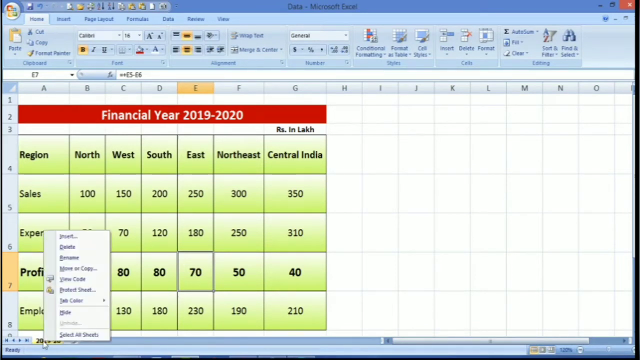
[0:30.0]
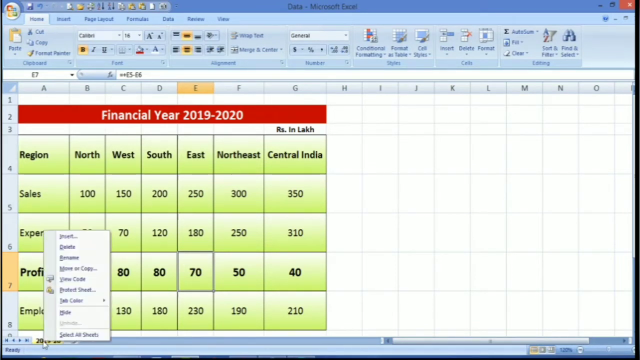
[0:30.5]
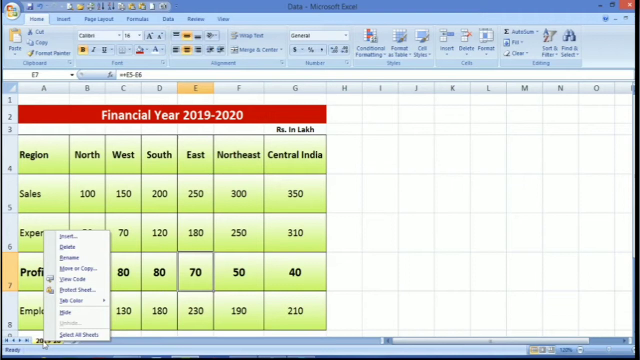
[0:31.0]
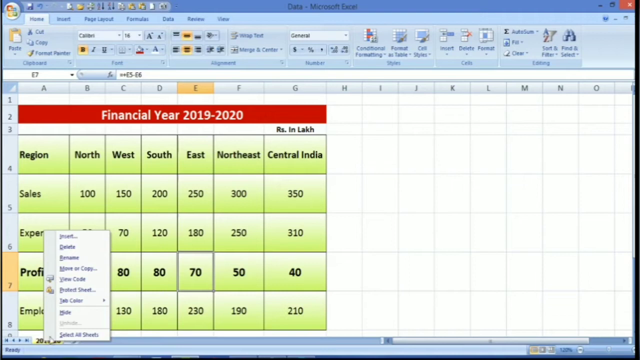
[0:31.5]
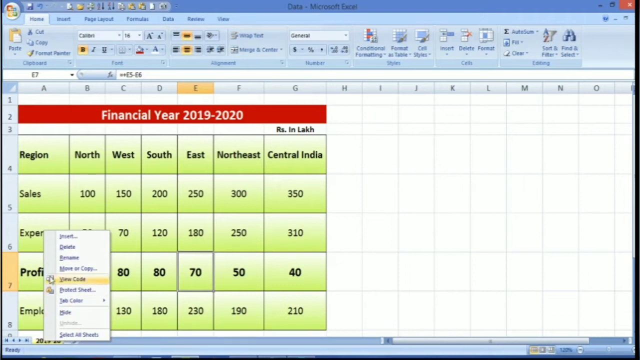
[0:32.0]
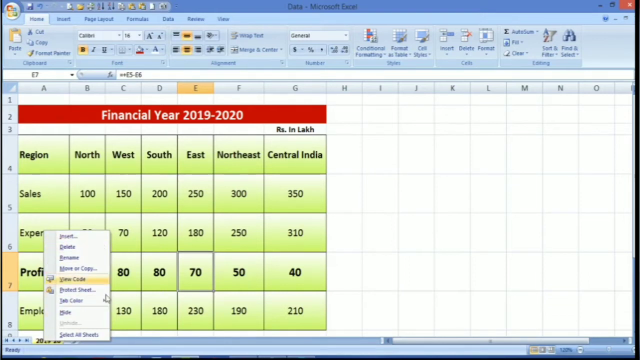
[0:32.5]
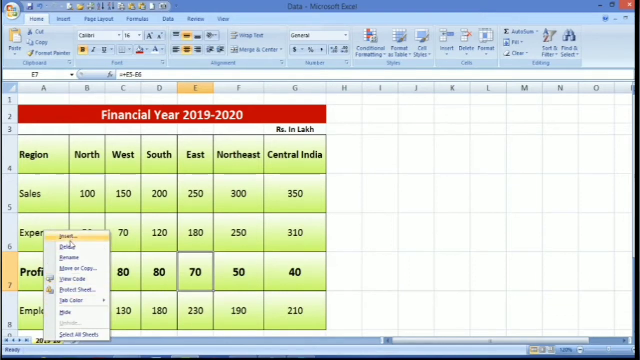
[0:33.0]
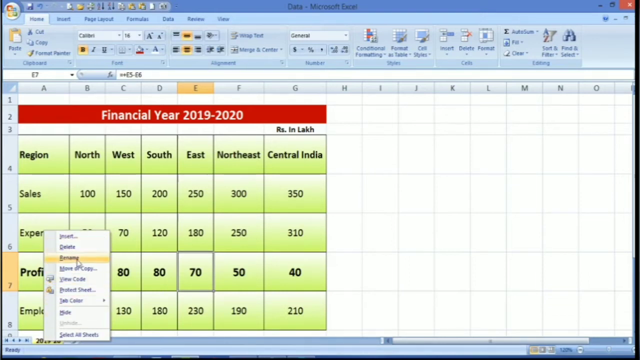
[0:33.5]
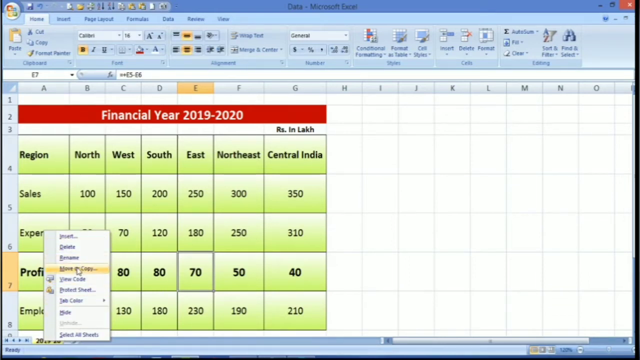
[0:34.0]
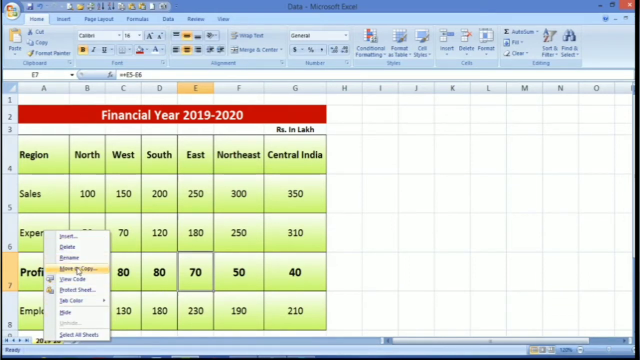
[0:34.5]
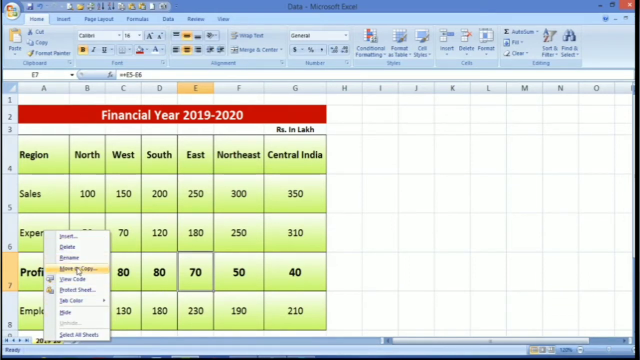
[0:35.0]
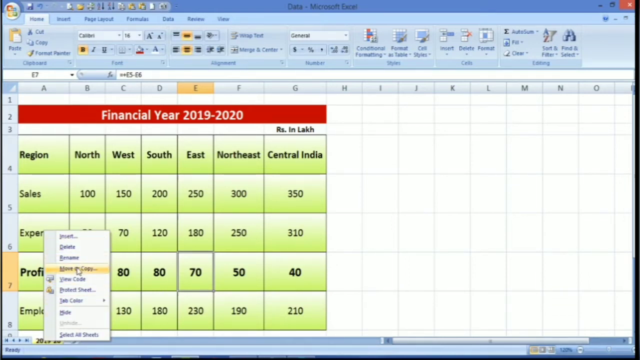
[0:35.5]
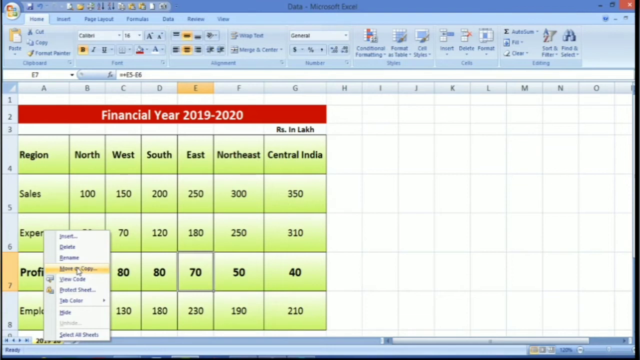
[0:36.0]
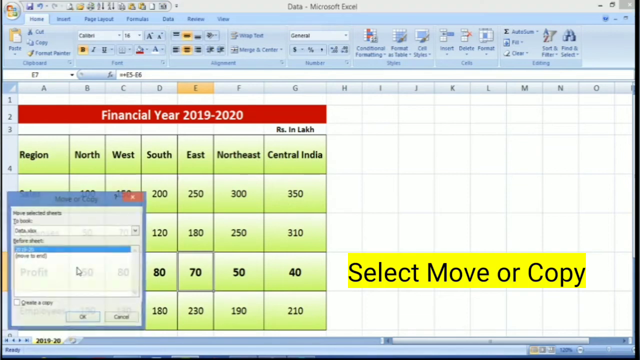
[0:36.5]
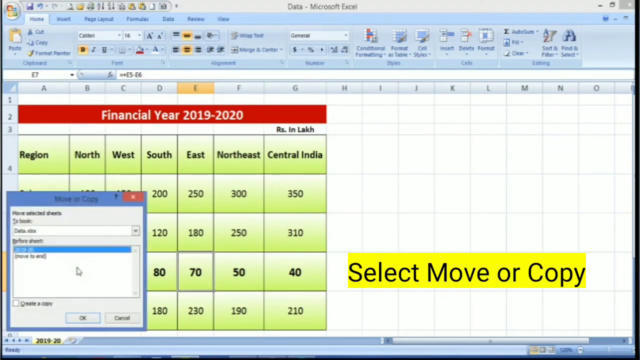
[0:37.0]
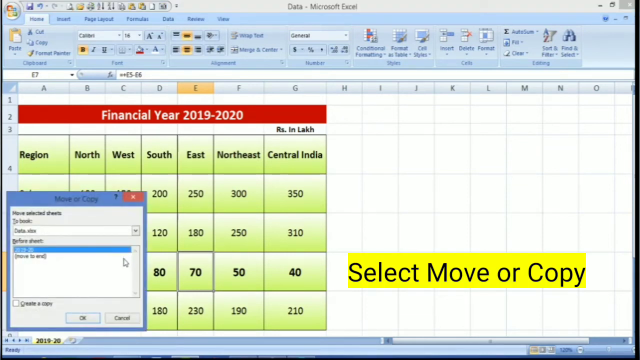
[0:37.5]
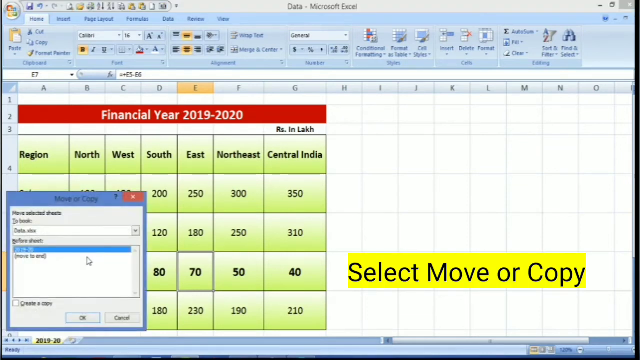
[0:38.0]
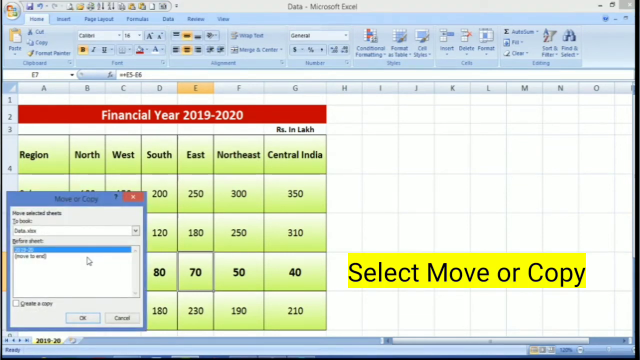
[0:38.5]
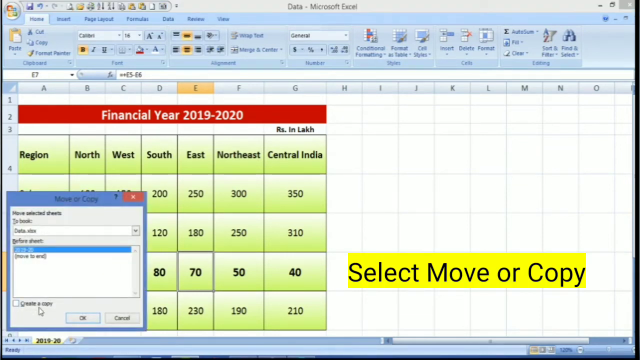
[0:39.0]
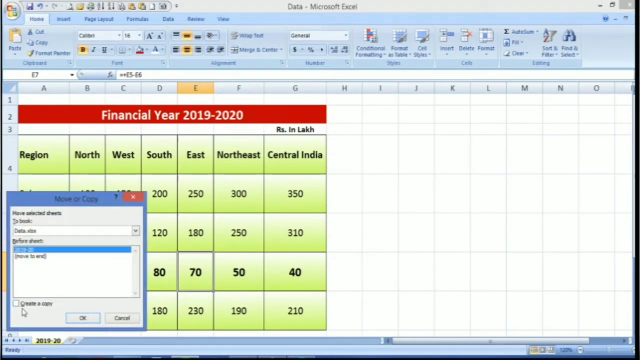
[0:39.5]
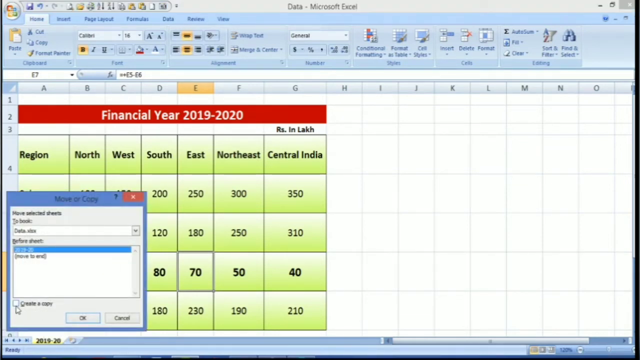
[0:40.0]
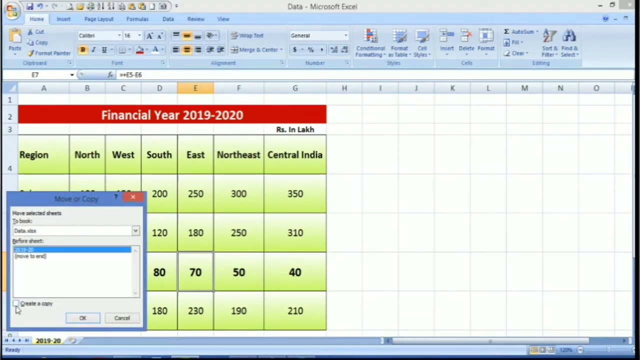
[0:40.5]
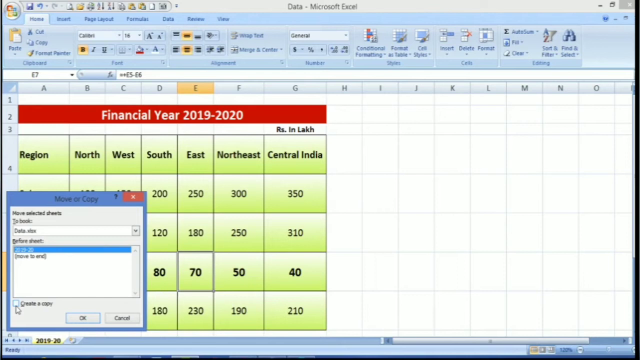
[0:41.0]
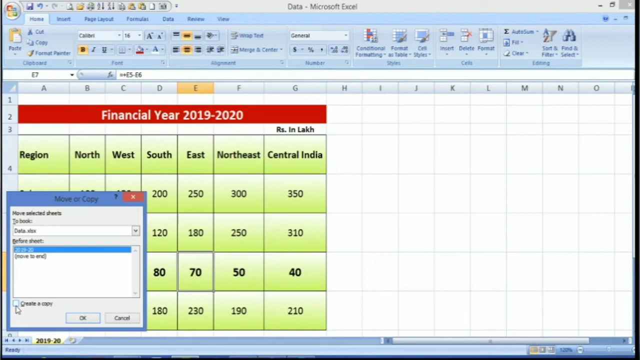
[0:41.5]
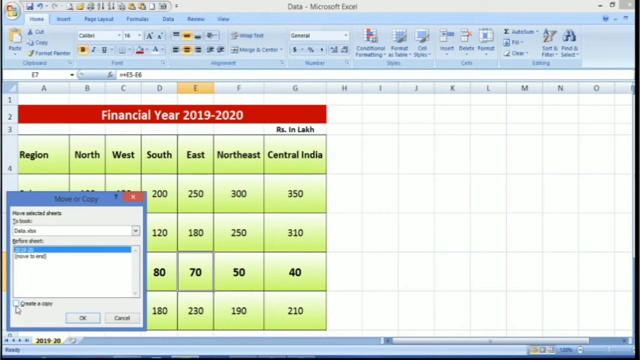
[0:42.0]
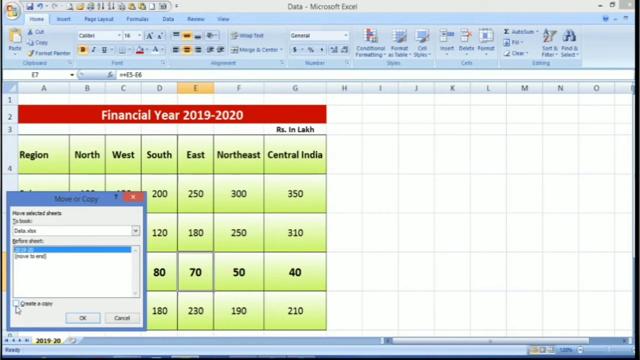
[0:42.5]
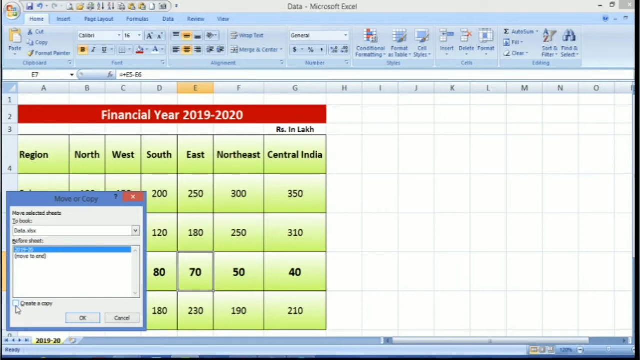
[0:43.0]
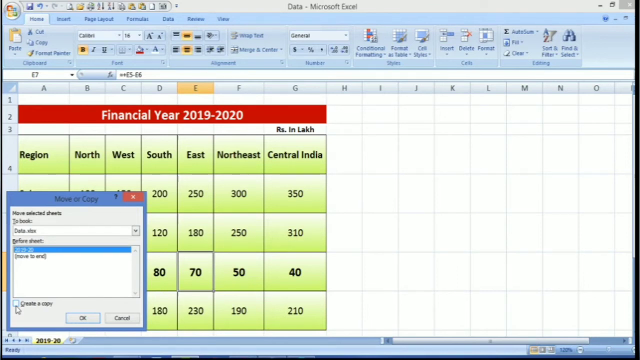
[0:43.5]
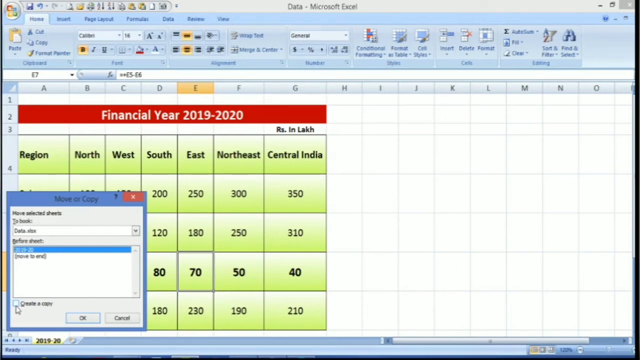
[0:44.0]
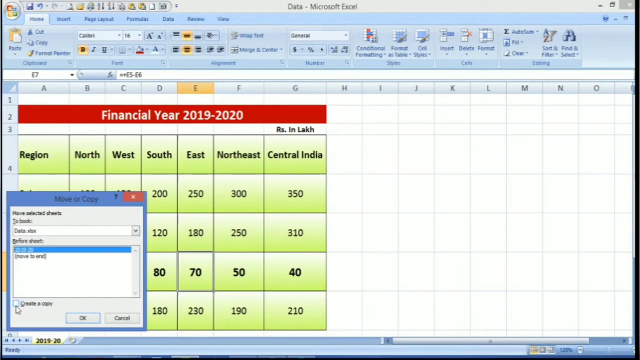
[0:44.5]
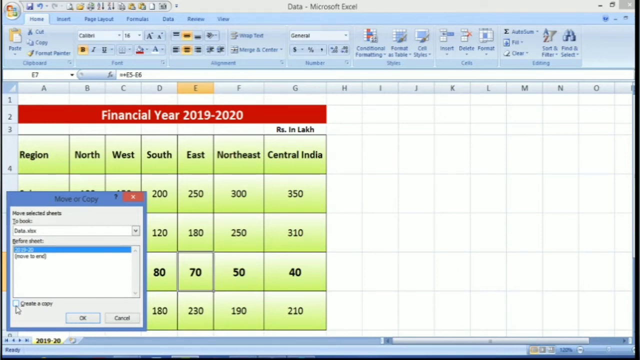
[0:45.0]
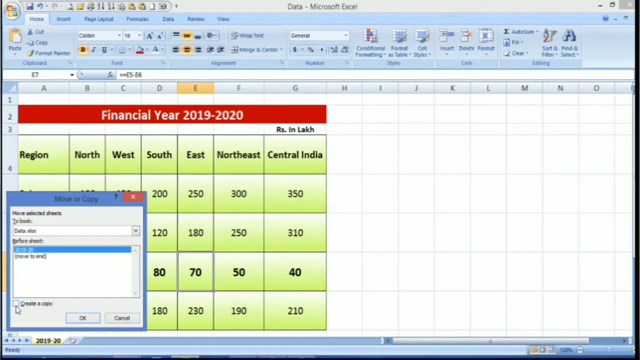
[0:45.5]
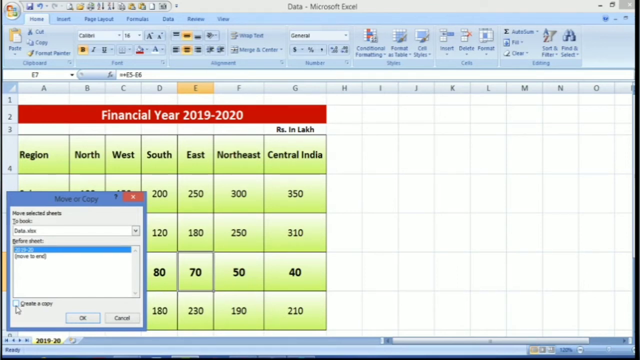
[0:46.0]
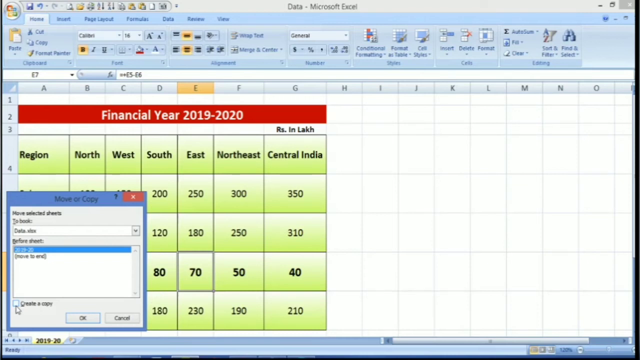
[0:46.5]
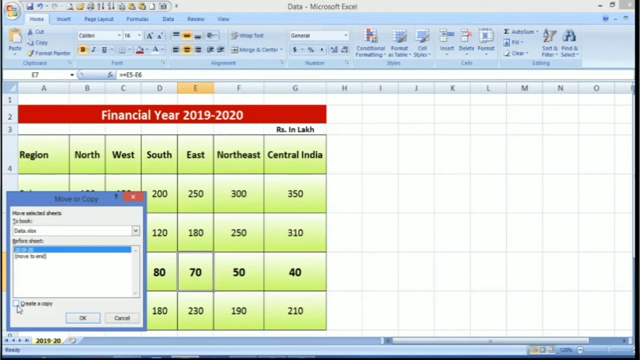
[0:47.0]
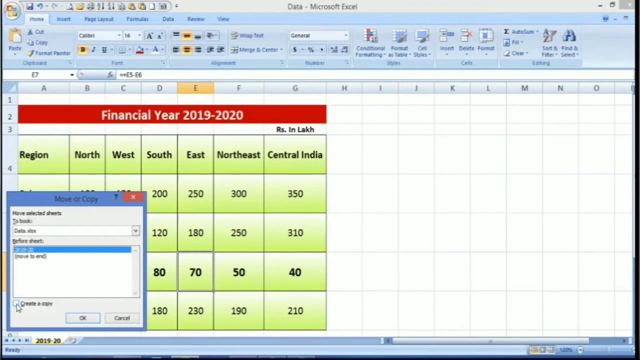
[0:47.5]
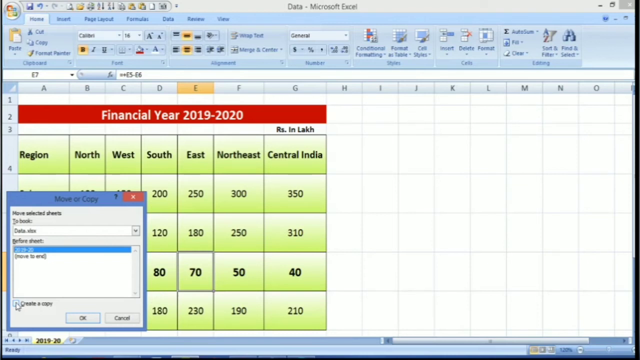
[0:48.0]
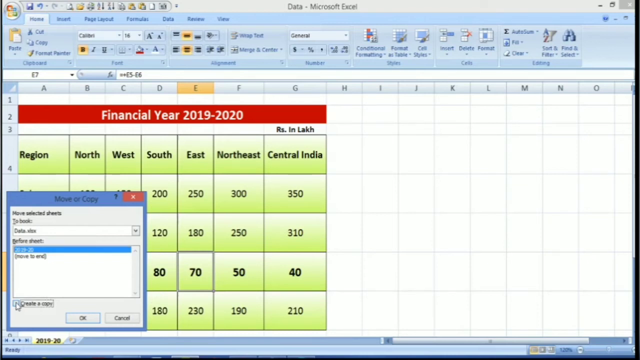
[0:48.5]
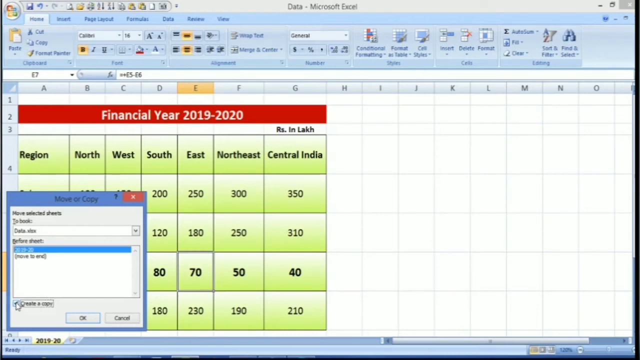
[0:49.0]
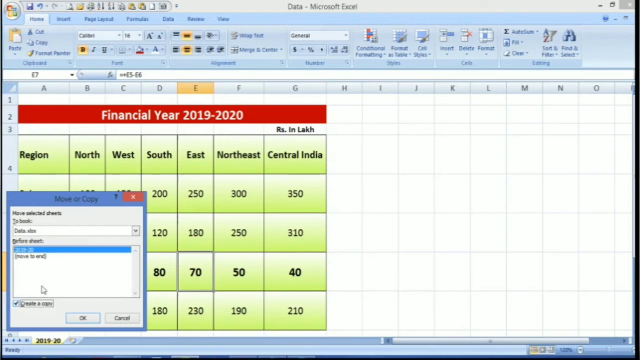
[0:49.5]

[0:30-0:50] The video is slightly wider than it is tall and shows a spreadsheet in a modern version of Excel. At the very top it is titled "Data", with the usual tabs and buttons below, and the Home tab appears to be selected. In the main work area, a red title bar runs left to right across the second row, reading "financial year 2019 to 2020" in white text in the center. Below it is a green worksheet with columns region, north, west, south, east, northeast and central India, and rows sales, expenses and profit. Apparently a right-click is made and "move or copy" is selected. A window titled "move or copy" opens in the lower left. On the right, a highlighted group of black text appears, reading "select, move, or copy". The first option in the window appears to be selected, then the cursor moves over the "create a copy" checkbox and the mouse clicks it.